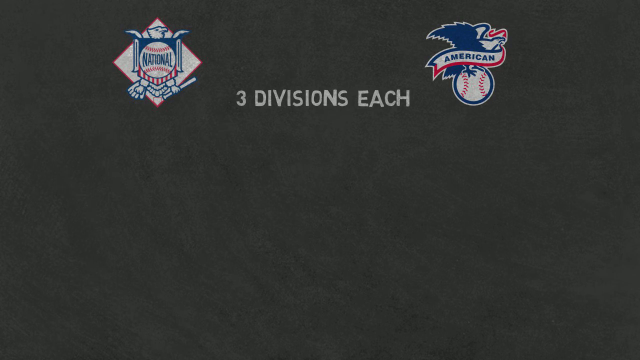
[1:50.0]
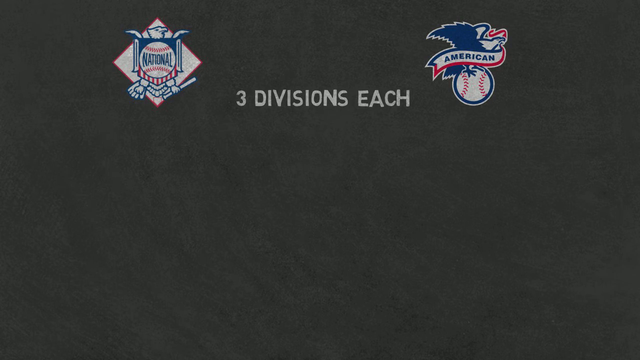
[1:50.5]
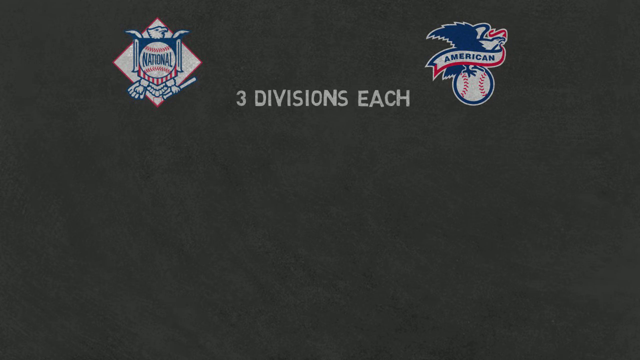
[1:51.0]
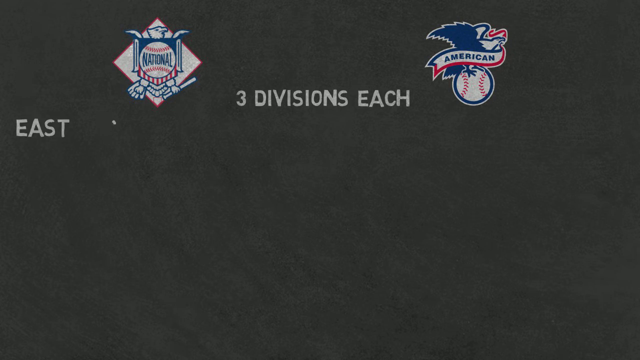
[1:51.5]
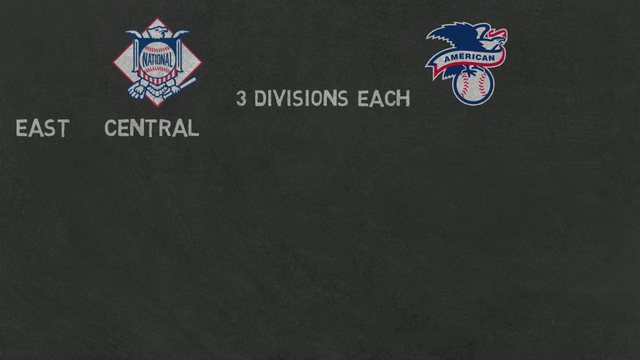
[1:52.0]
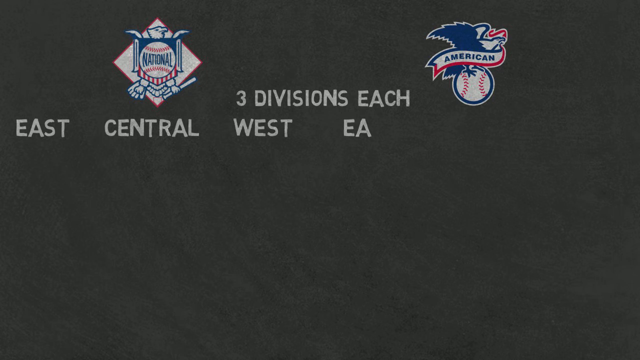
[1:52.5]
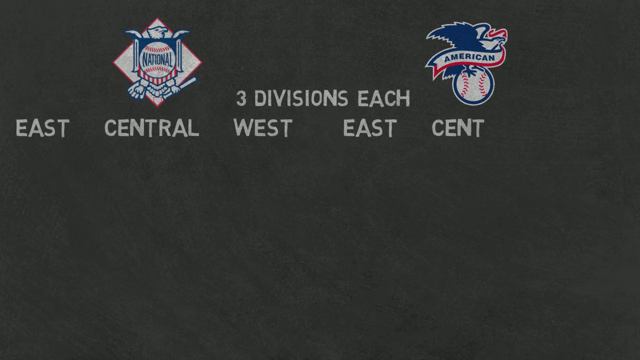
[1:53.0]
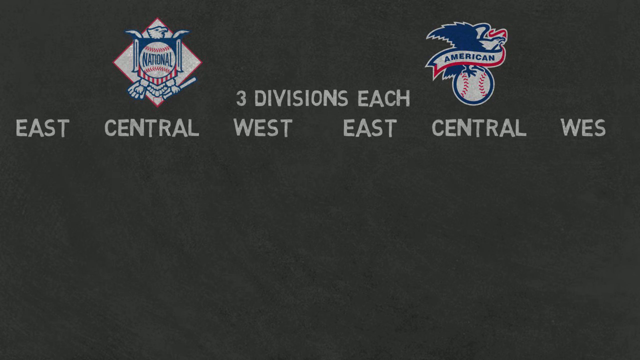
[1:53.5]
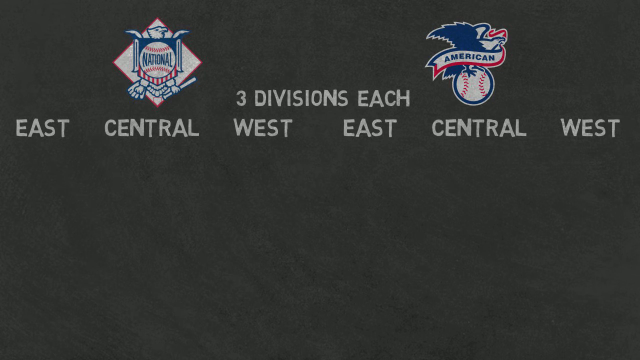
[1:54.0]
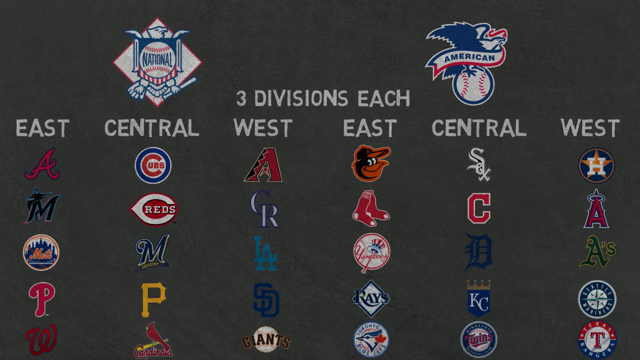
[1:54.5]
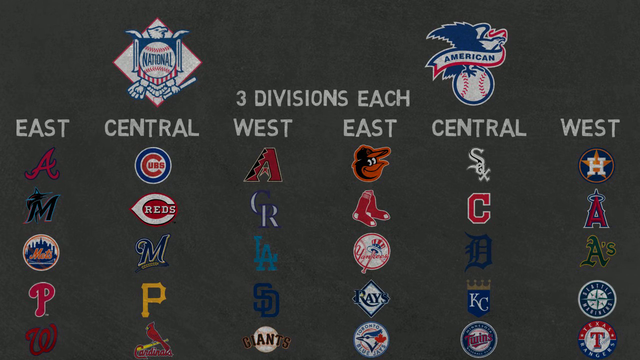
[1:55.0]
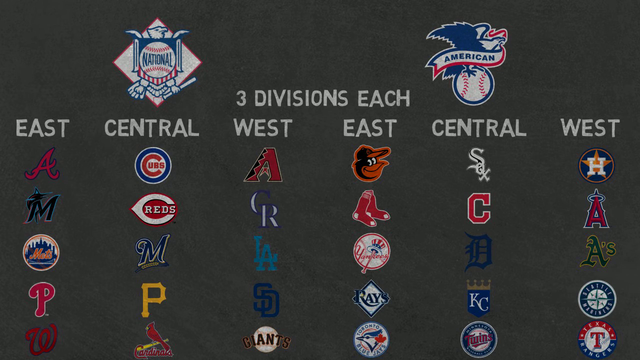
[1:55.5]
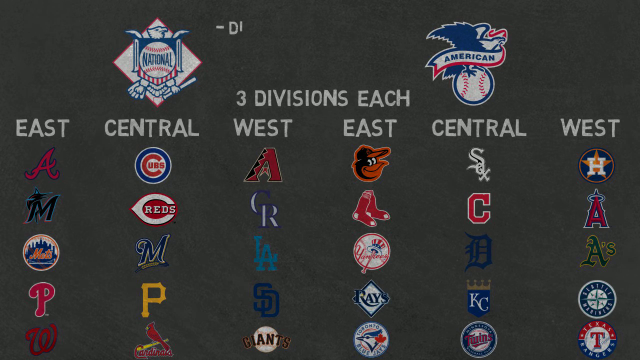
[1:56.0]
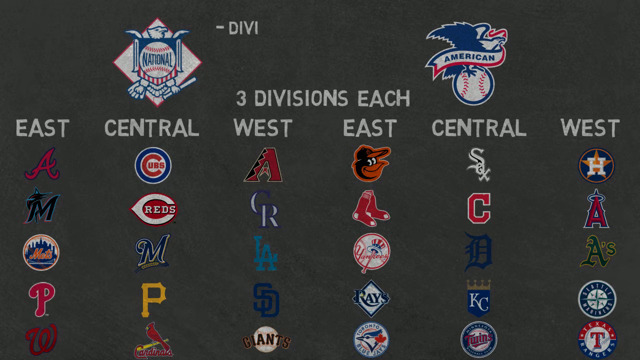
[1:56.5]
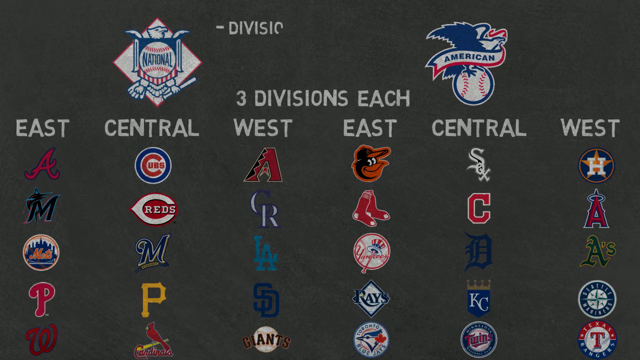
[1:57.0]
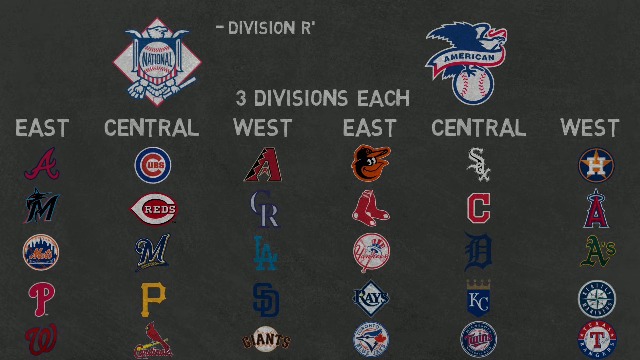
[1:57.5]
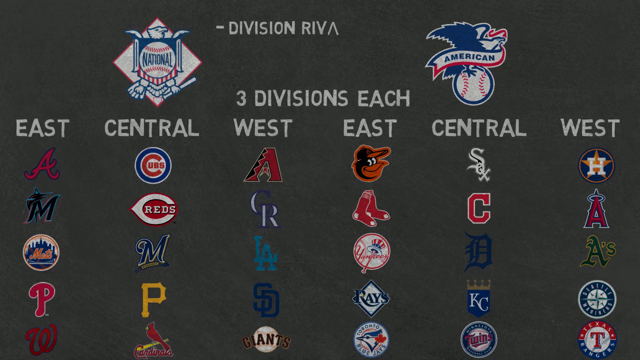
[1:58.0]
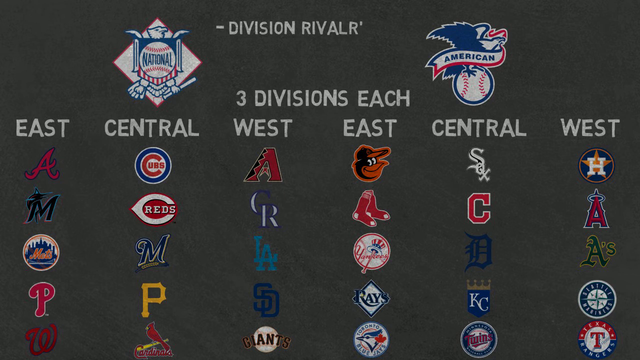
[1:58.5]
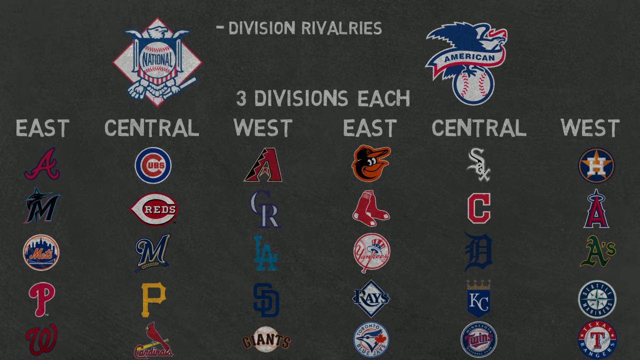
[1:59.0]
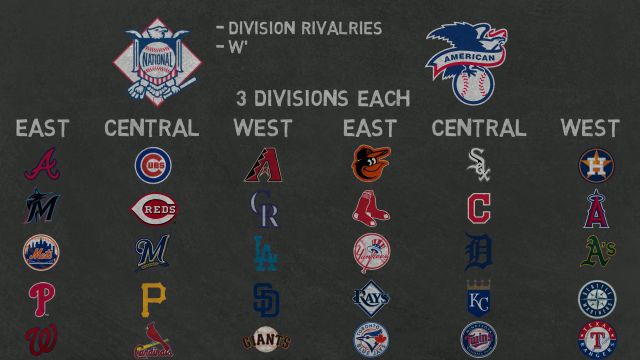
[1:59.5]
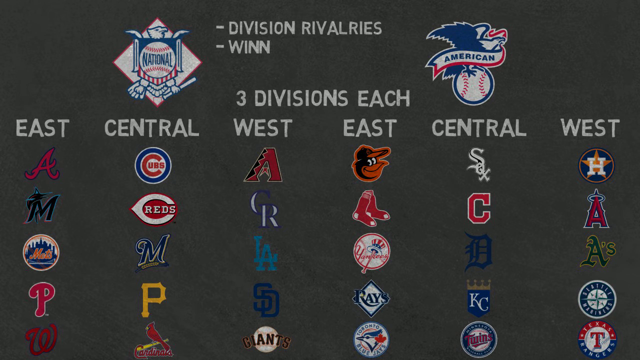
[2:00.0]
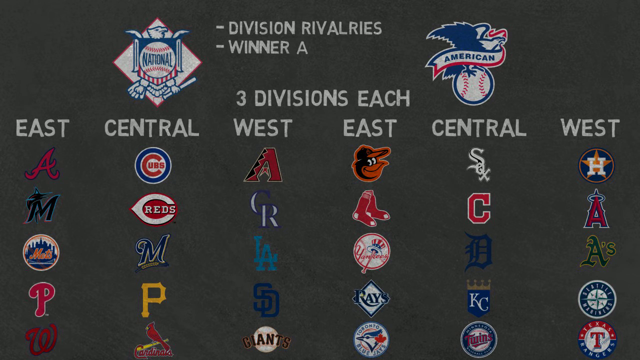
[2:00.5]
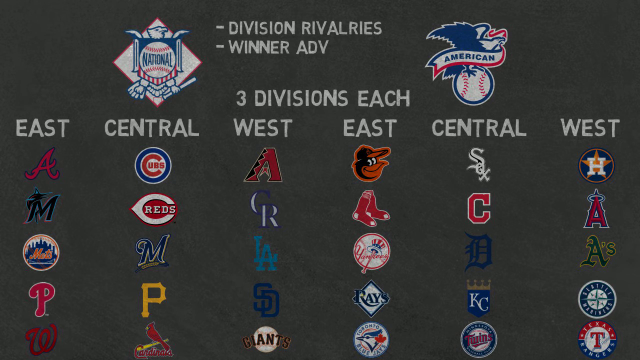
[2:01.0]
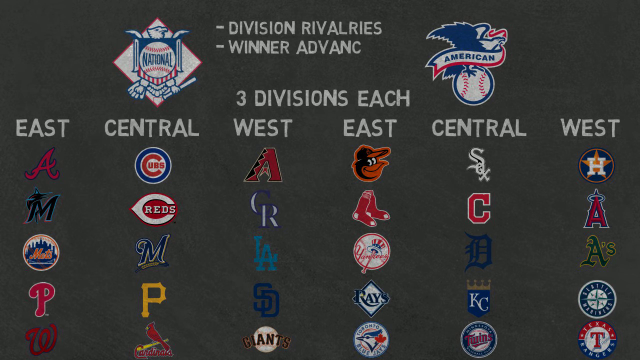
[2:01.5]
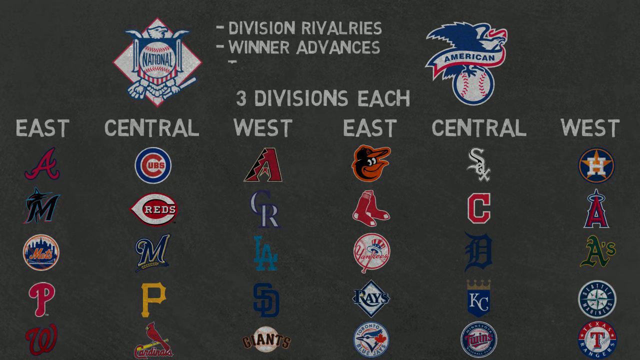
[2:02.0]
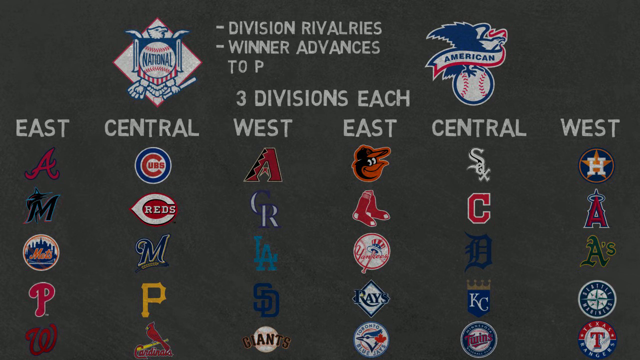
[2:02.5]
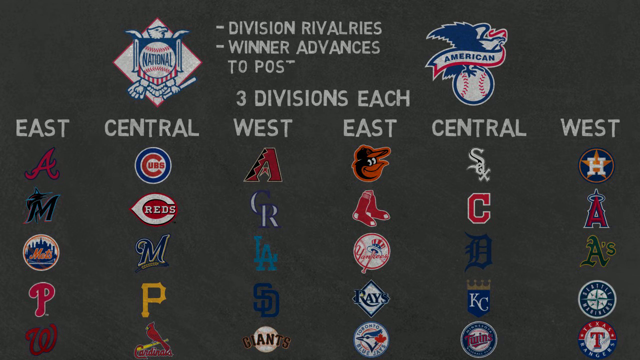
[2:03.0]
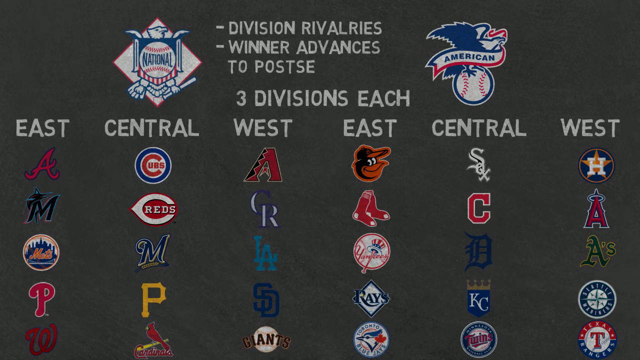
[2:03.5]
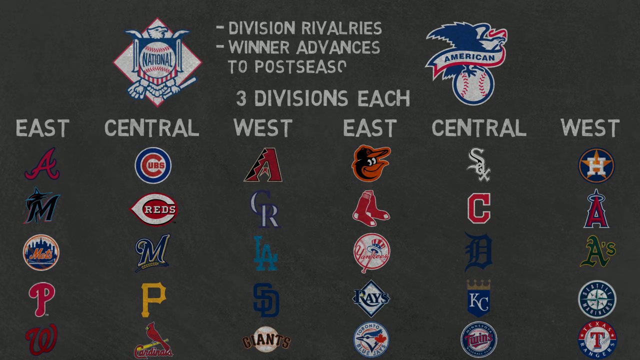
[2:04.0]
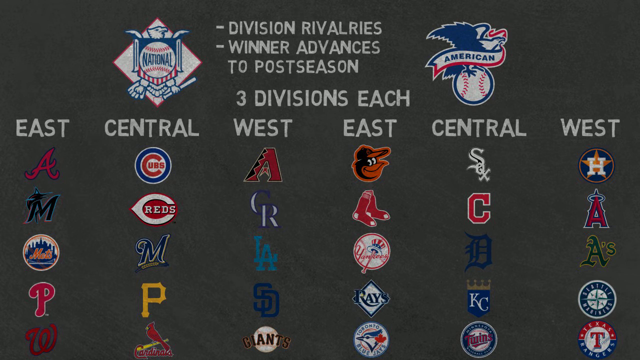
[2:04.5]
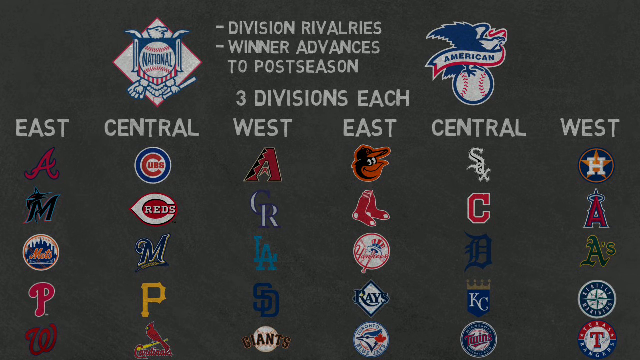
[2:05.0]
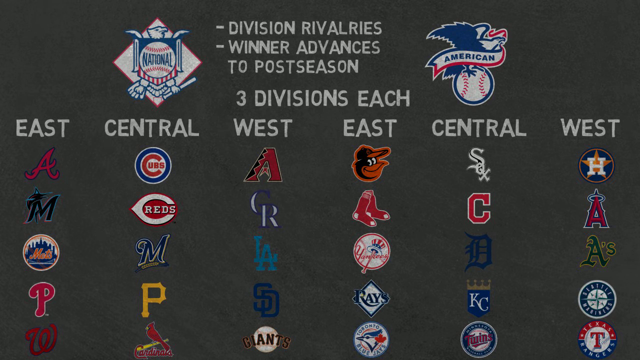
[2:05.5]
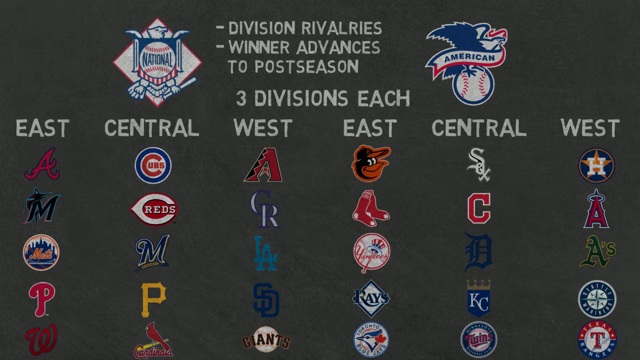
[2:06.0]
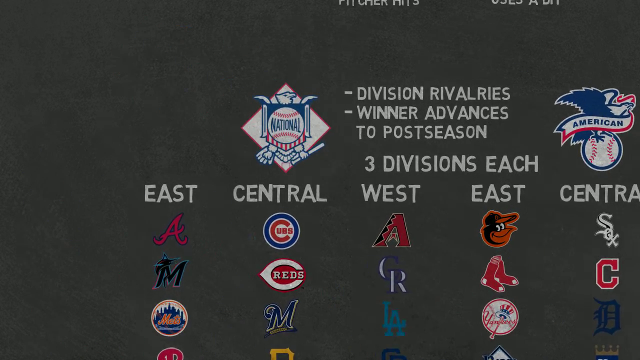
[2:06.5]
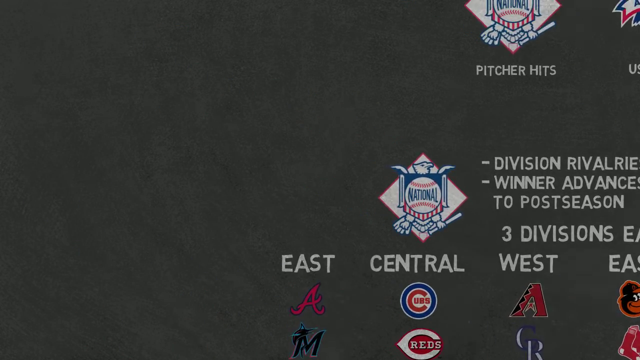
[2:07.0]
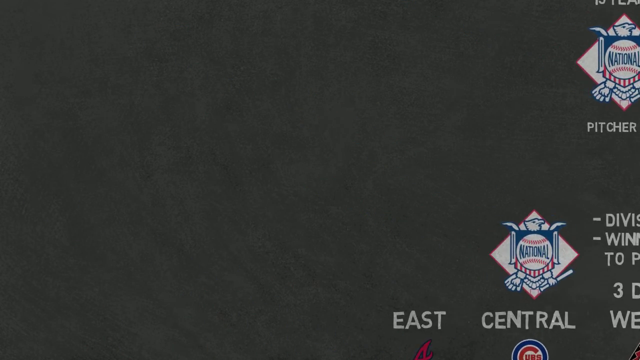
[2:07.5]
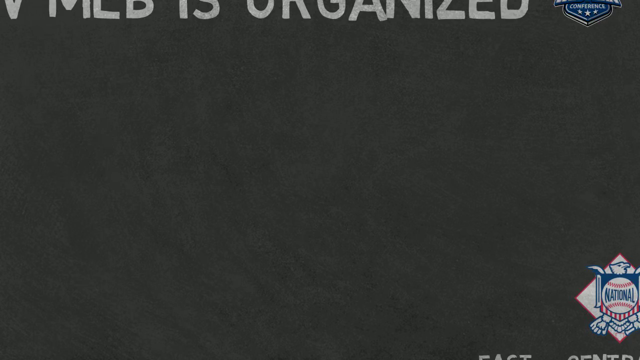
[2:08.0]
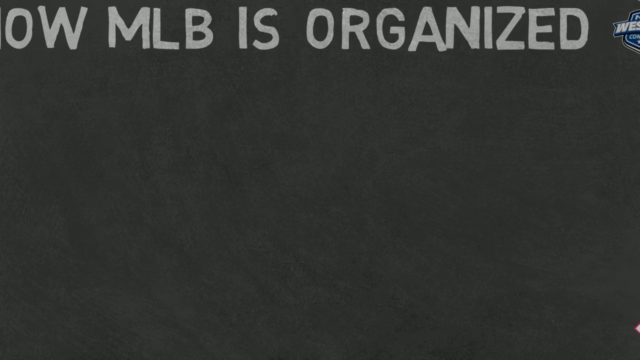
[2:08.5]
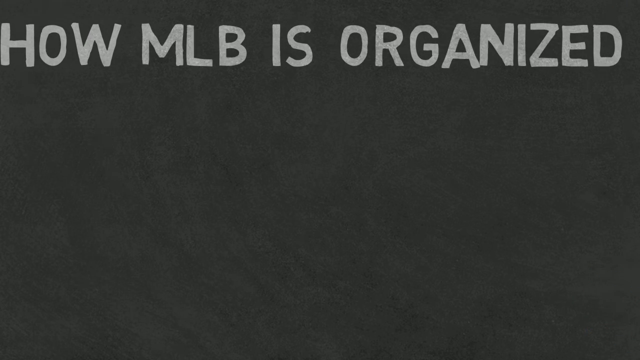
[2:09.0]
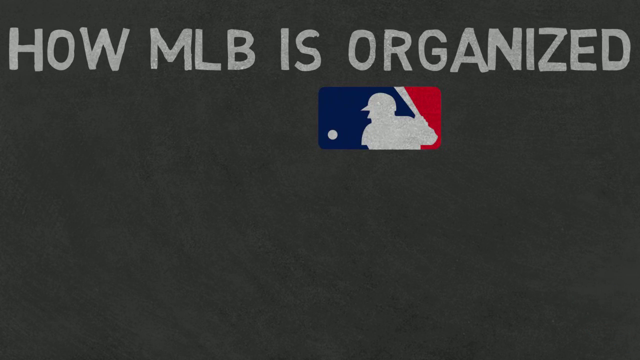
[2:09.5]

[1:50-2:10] With the text "three divisions each", "east central west" pops up under the National logo and also under the American logo. Suddenly all the logos of the different teams are displayed in what seems to be a six by four chart. At the top, in dashes, text reads "division rivalries", and below it "winner advances to post season". On the left side, a chalky title reads "how mlb is organized". The team logos look like typical sports team logos: under National East there is a fancy-looking red A, below that an M with some special drawings, and there is the Boston Red Socks logo, which is just two red socks dangling.